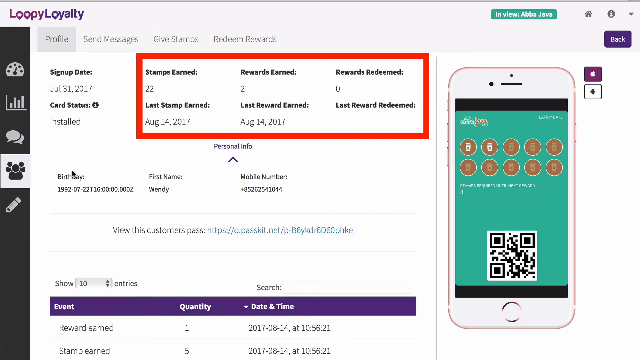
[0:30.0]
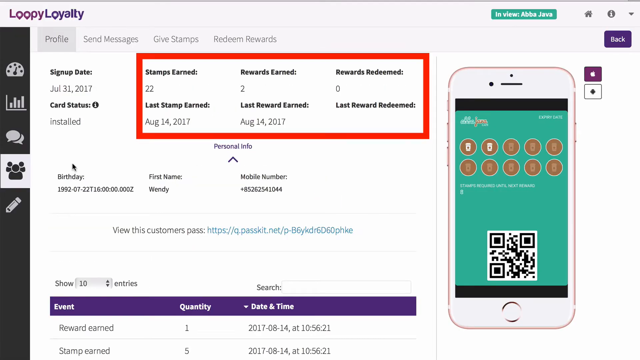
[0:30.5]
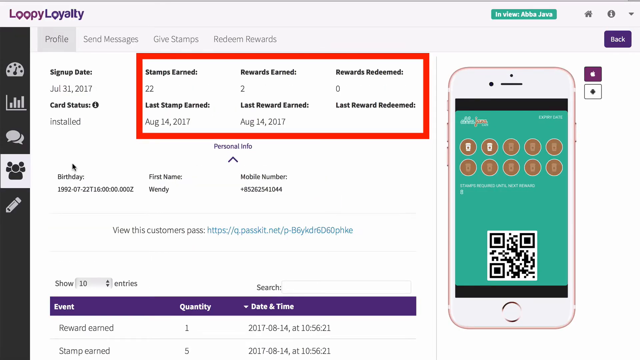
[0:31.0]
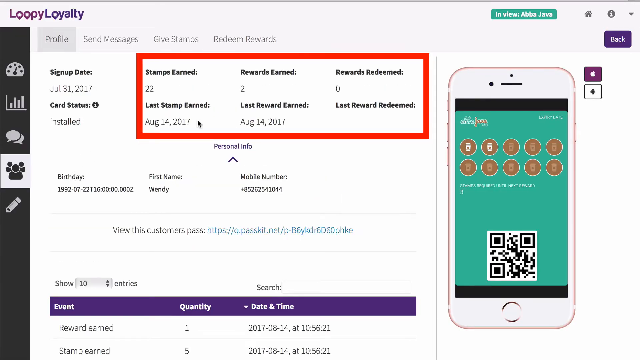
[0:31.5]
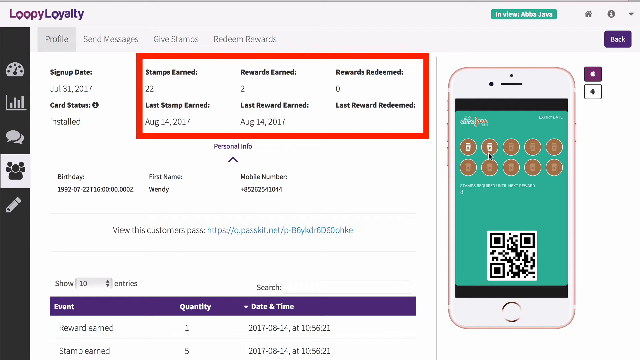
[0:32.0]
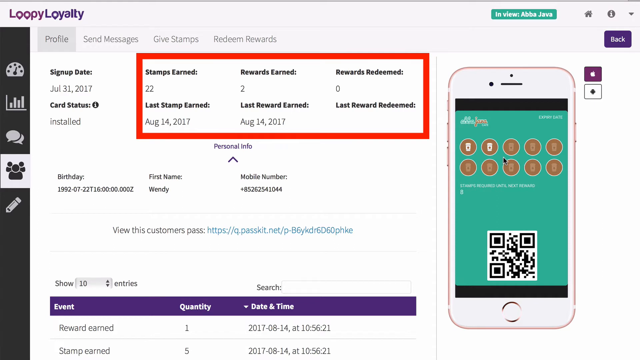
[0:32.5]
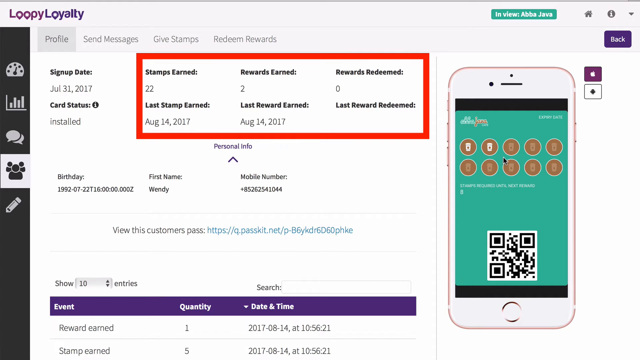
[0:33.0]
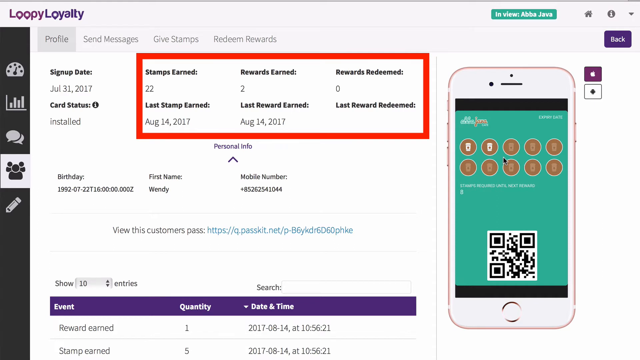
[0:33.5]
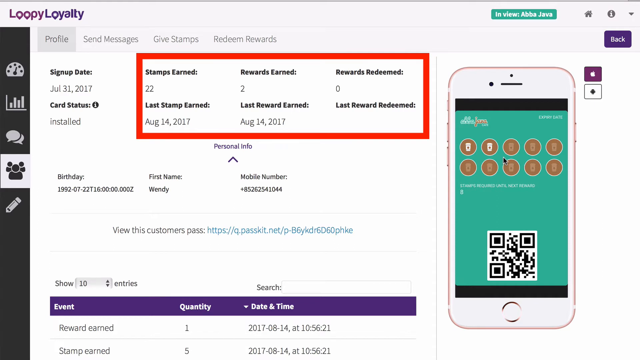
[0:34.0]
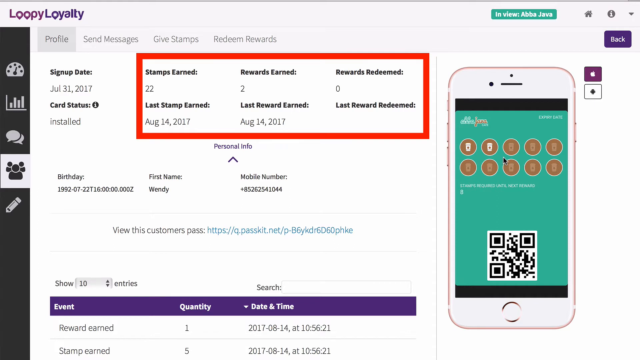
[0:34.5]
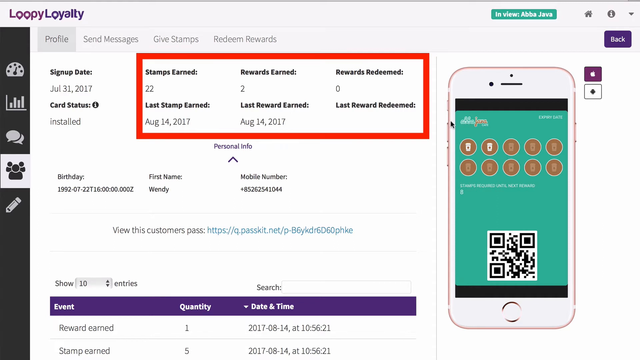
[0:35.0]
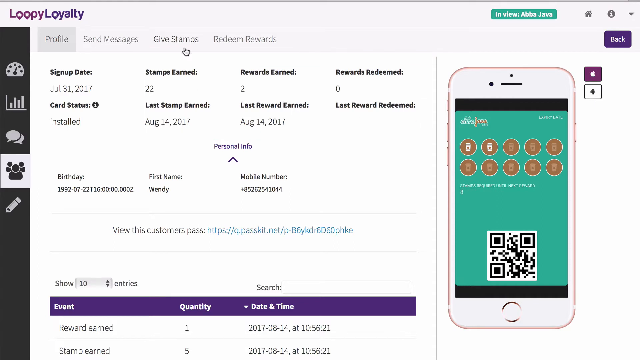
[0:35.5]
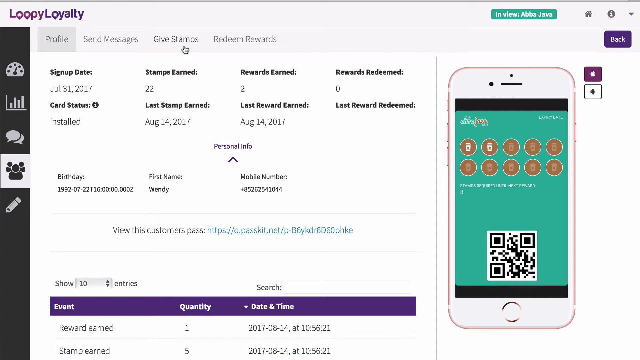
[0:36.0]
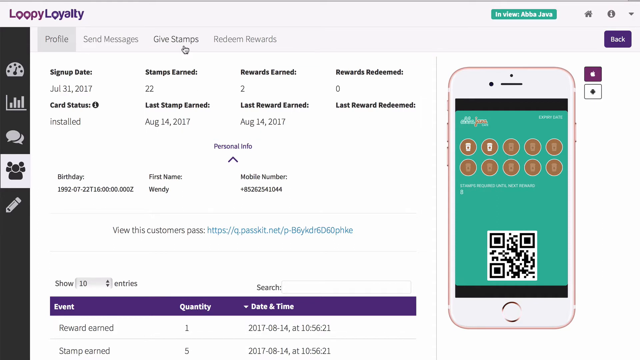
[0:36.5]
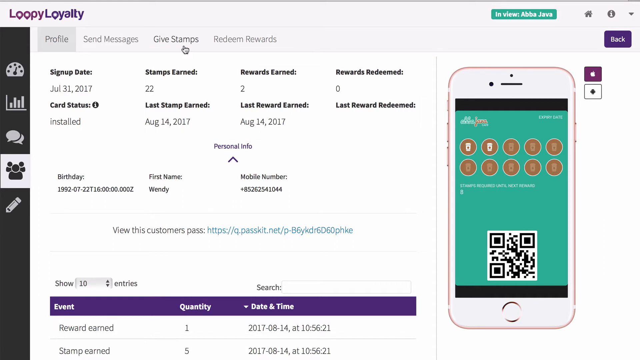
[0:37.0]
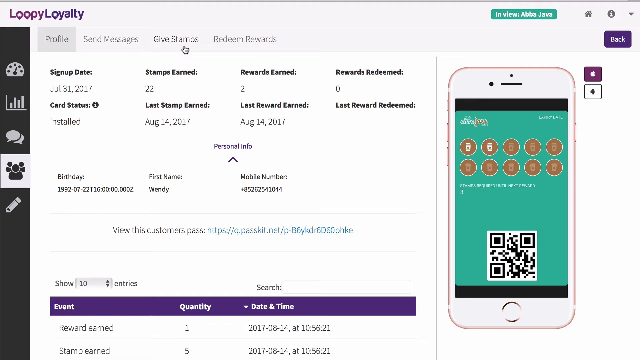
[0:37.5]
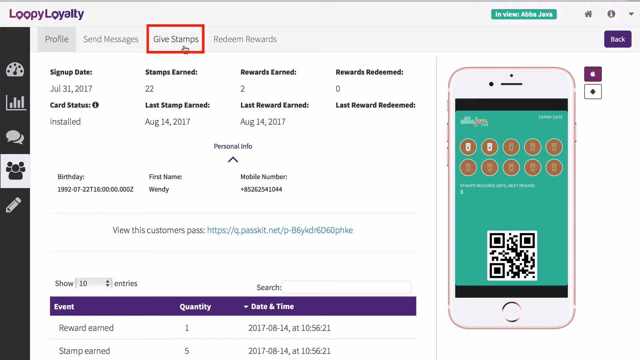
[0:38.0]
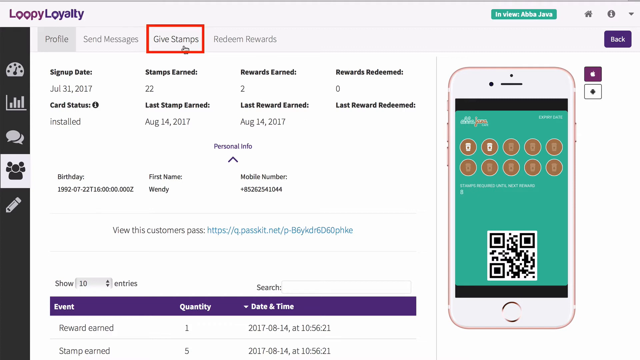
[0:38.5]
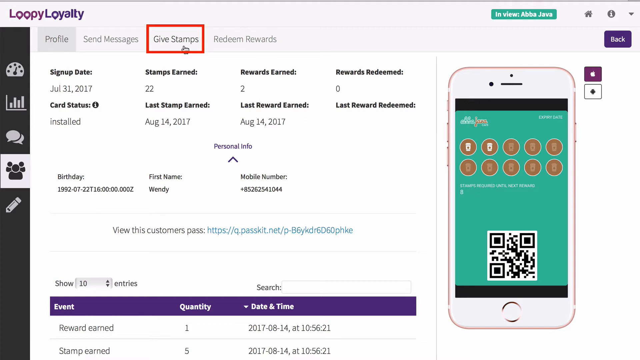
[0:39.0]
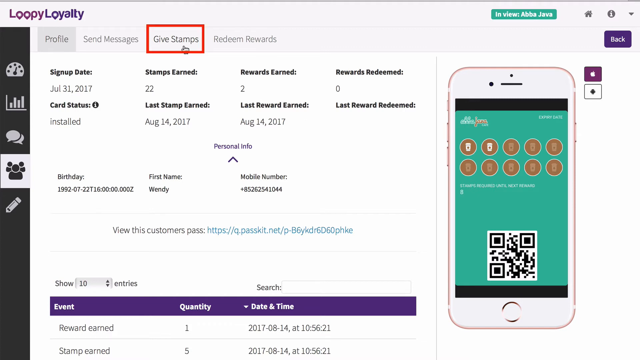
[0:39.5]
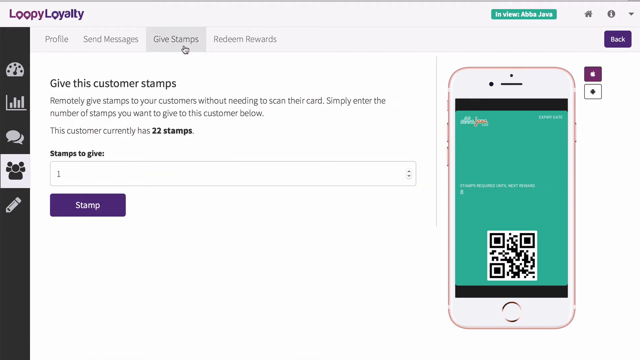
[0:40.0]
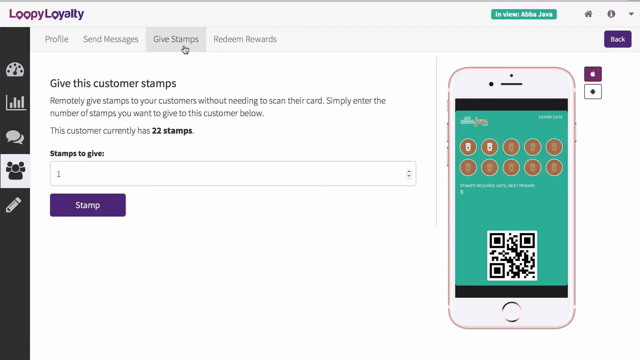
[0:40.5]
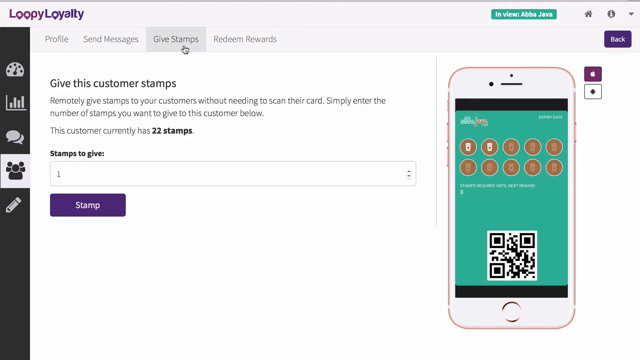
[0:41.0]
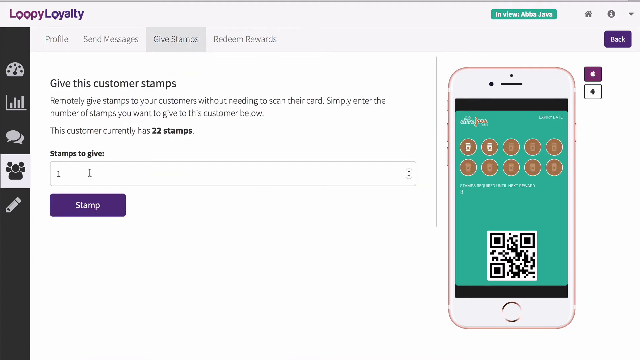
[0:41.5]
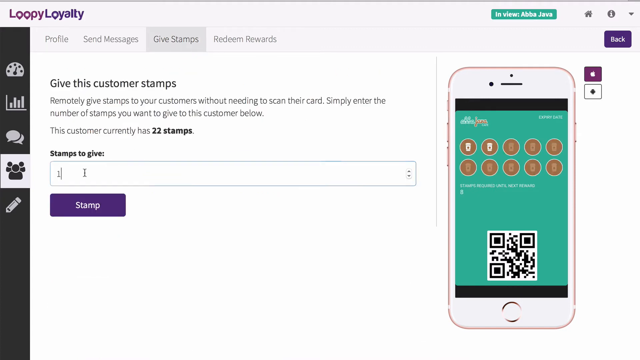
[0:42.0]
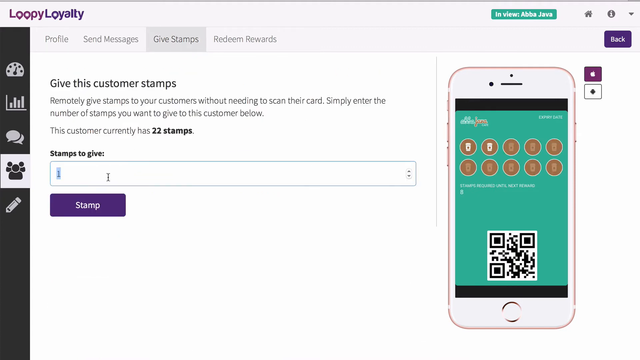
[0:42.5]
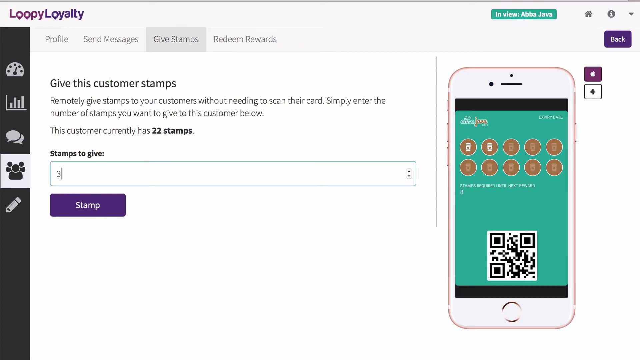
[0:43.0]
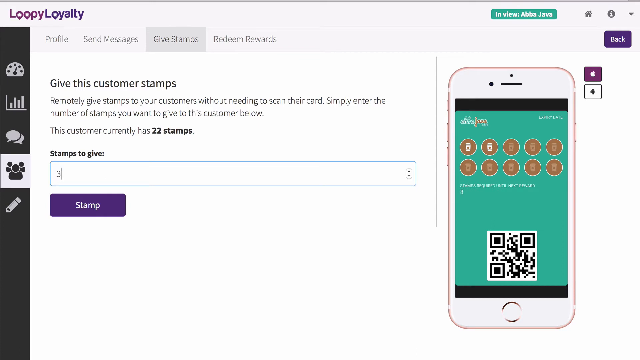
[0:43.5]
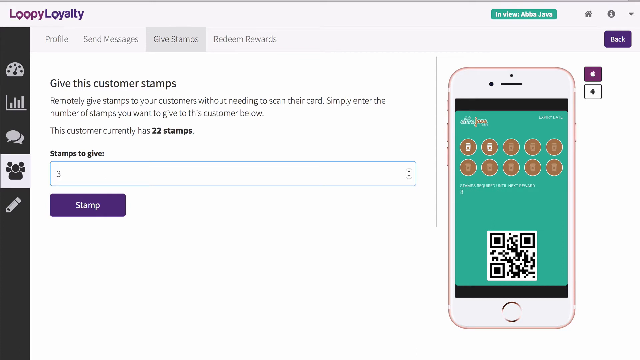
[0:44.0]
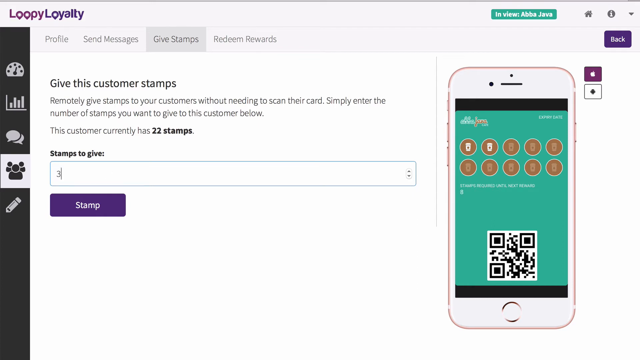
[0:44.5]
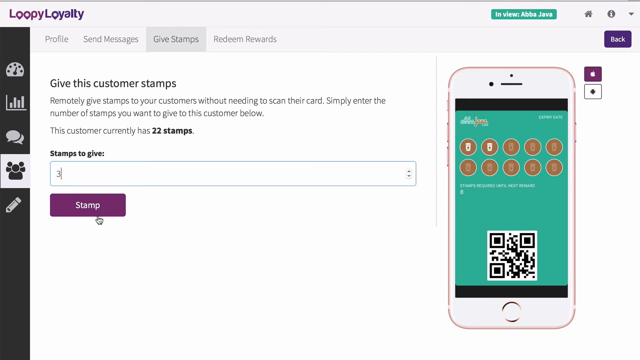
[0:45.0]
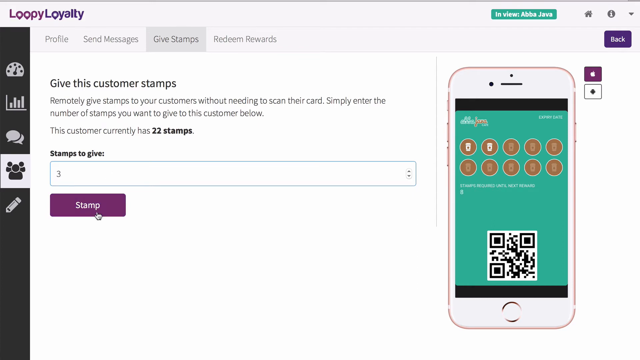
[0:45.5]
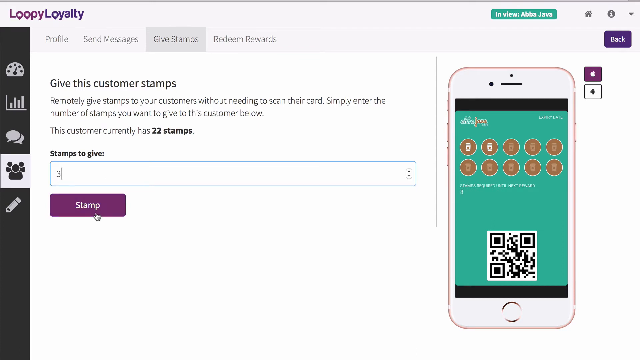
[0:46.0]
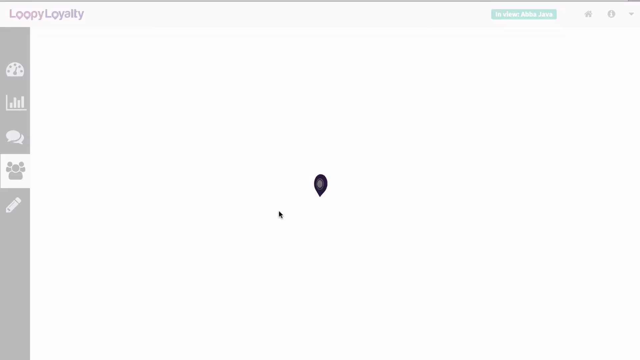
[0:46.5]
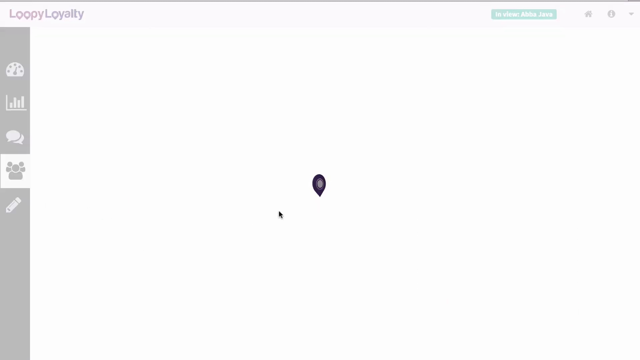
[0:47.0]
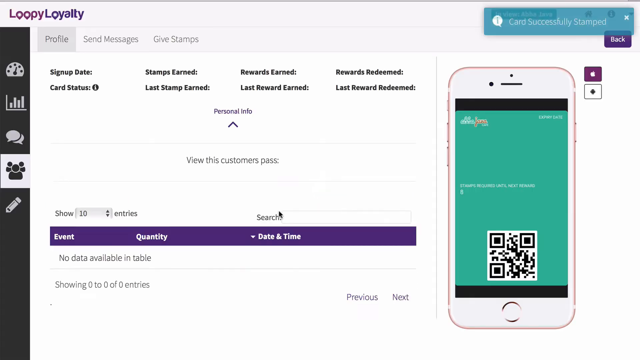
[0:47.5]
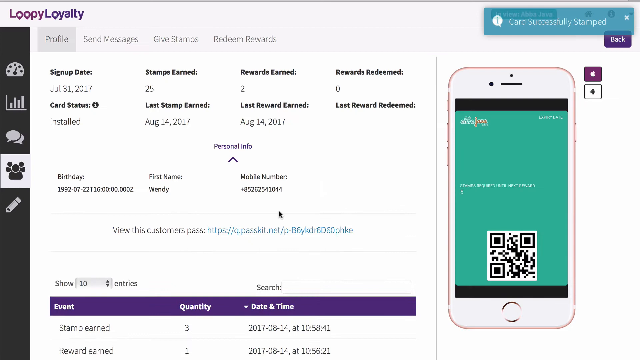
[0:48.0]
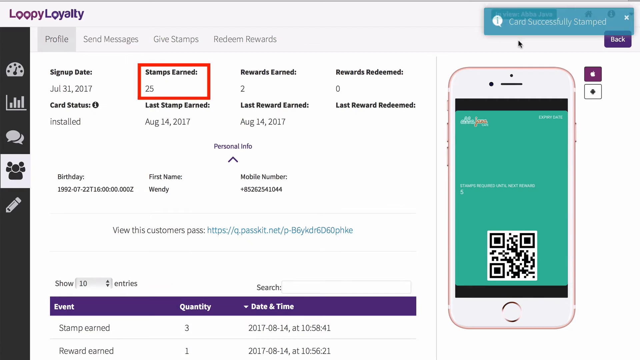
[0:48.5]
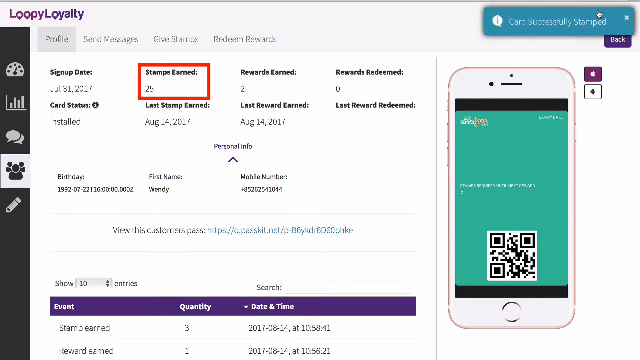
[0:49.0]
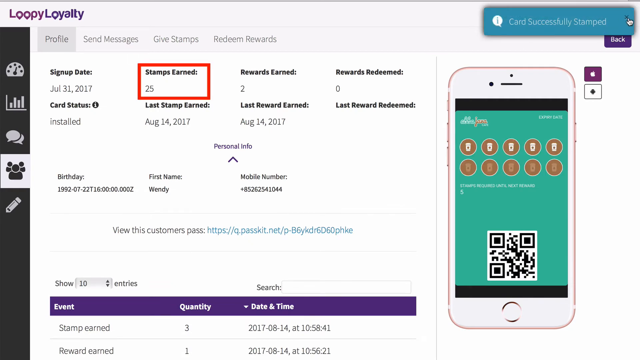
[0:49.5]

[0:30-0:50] A webpage for Loopy Loyalty shows the purple brand logo in the top left-hand corner of the screen. The profile tab is highlighted in a darker gray, and the customer information is displayed, including sign-up date, card status and other details. On the right-hand side of the screen is a mobile phone with a green screen background and red logos above a black and white QR code. In the middle of the screen, a red box highlights one section of the customer information, showing stamps earned, rewards earned, last stamp earned, last reward earned and last reward redeemed. The mouse cursor moves across the screen and presses the "Give Stamps" tab, which is then highlighted in red. This leads to a new page, "Give This Customer Stamps". The number three is typed in, and the button is pressed to submit it and add the stamps to the customer's account. The view returns to the customer's profile page, where the customer now has an increased number of stamps.